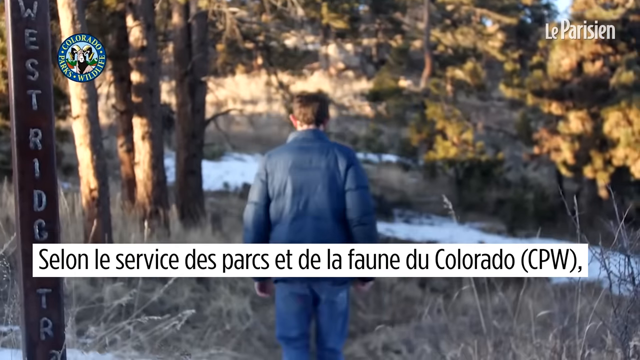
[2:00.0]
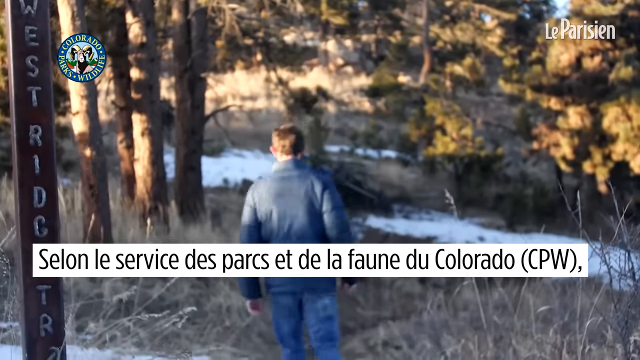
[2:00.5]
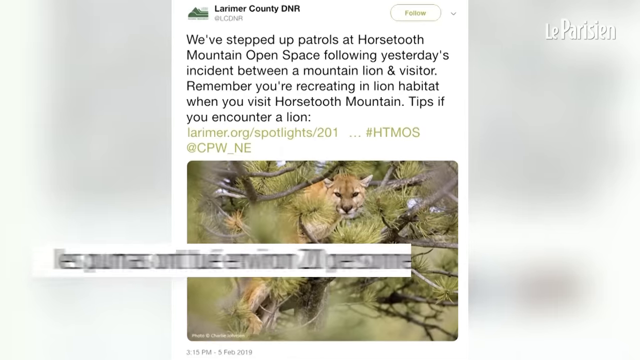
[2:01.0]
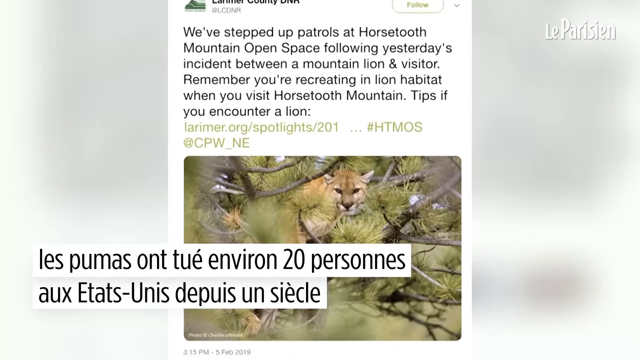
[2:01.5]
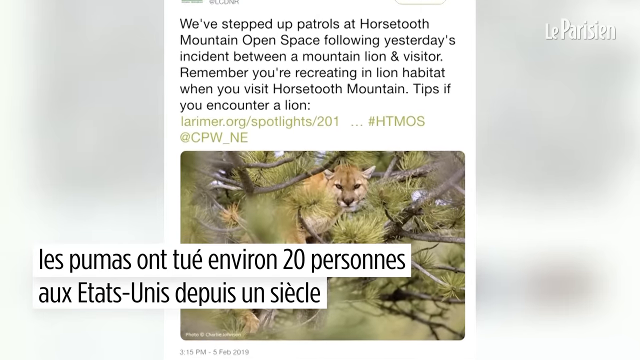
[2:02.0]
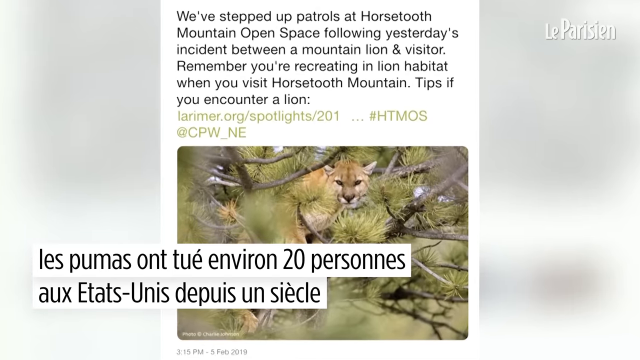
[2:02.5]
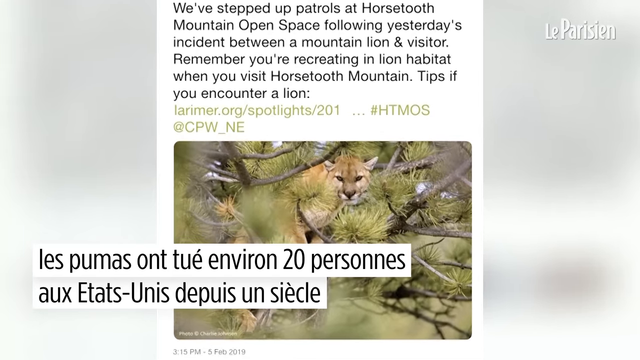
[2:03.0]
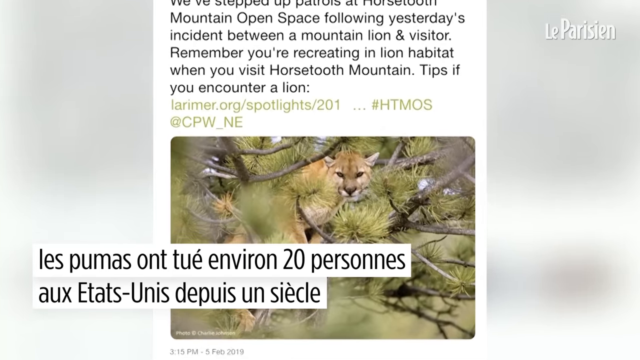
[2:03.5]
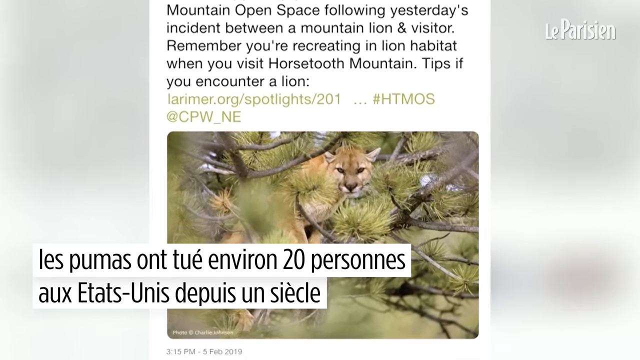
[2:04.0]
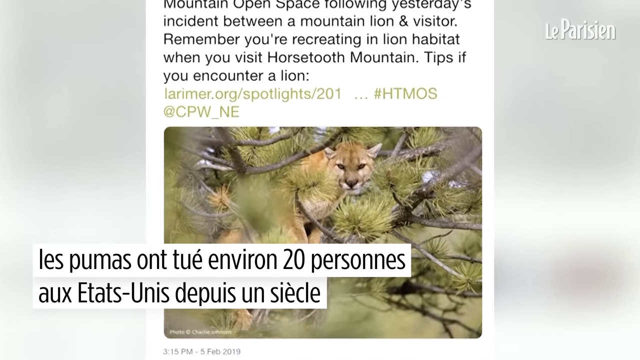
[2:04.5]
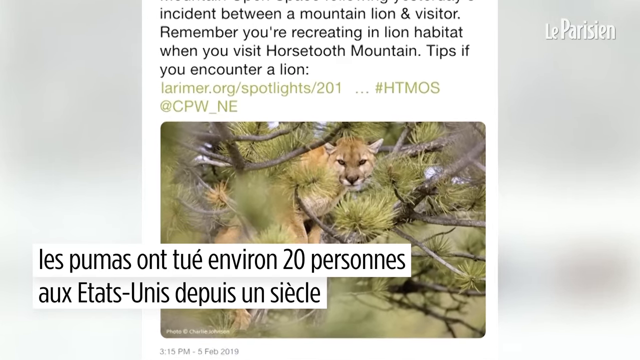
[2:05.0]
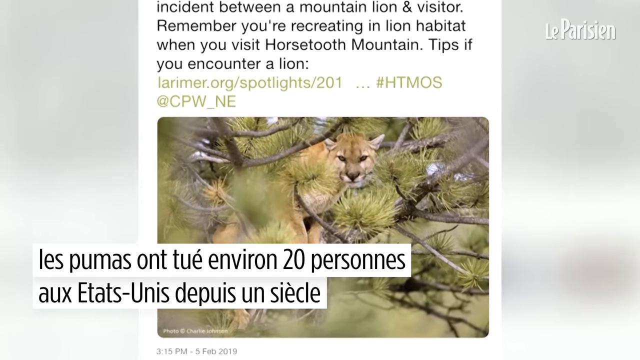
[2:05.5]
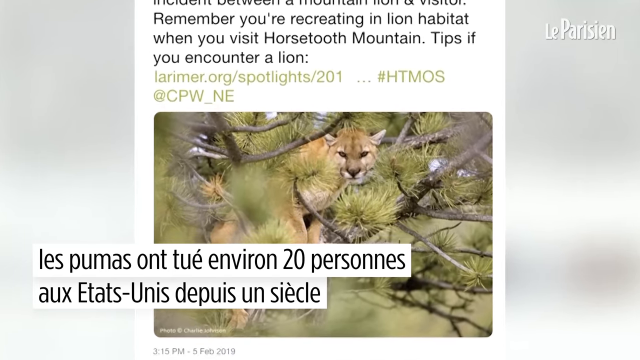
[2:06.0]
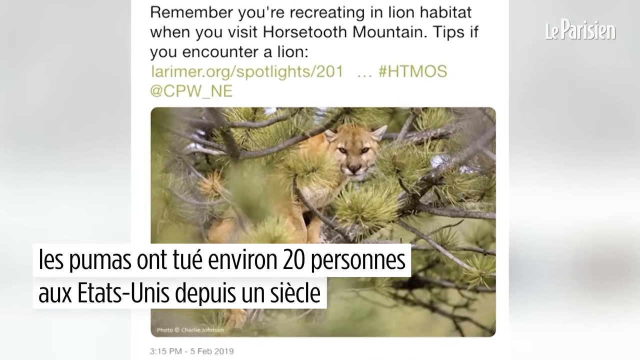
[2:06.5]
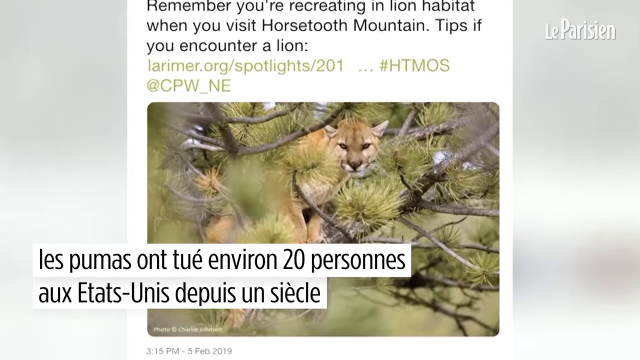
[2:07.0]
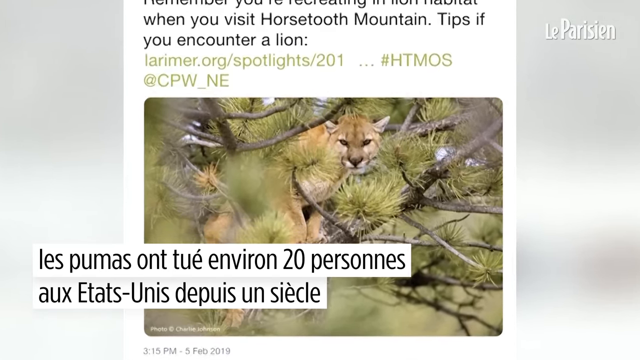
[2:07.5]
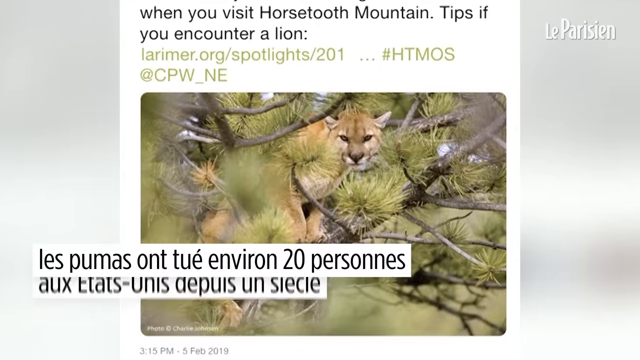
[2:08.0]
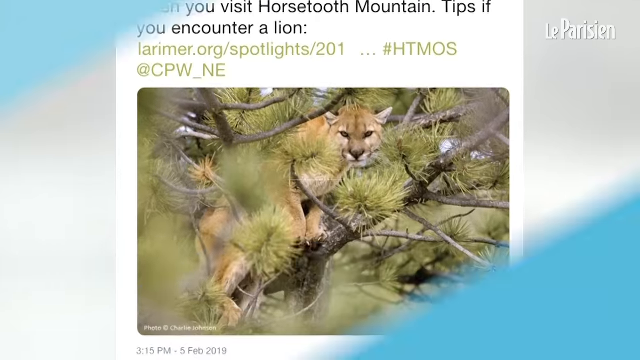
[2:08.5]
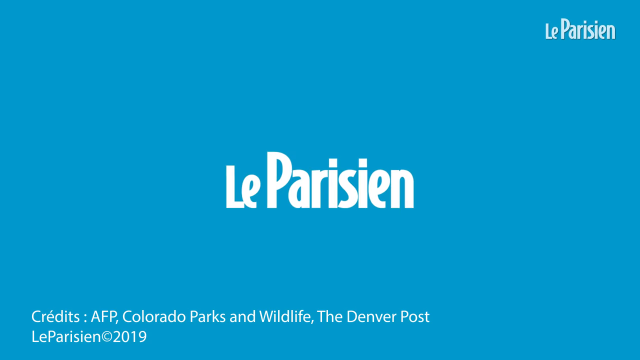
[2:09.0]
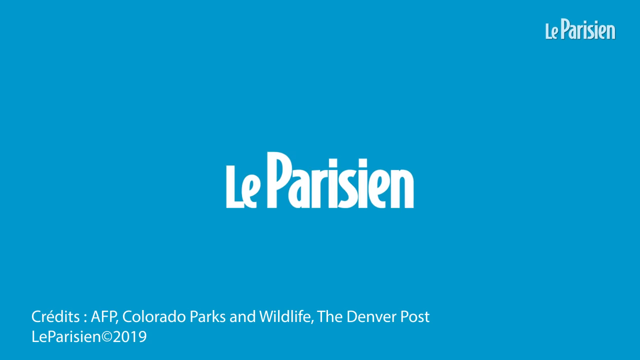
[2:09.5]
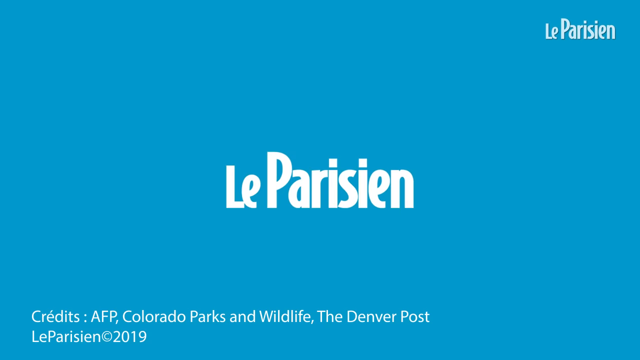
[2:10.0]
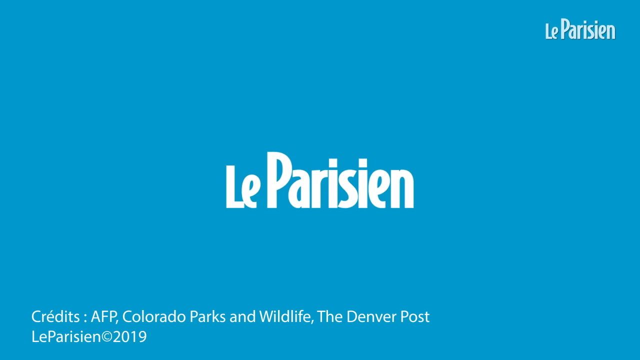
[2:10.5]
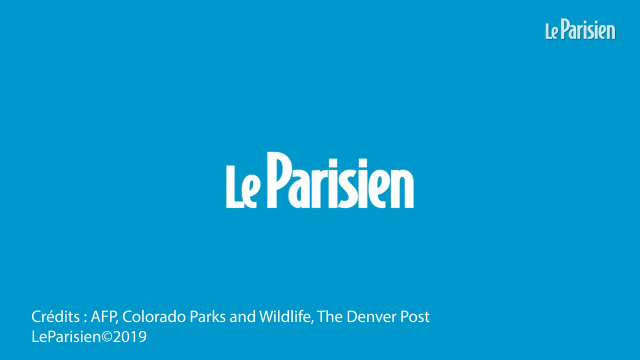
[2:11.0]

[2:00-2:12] A picture shows a man in a blue puff jacket standing in the wilderness, with many trees in the background. A sign on the left says "west RIDC," with the rest of the text cut off. There seems to be snow in the distance, with white patches on the ground. Black text on a white background is at the bottom middle of the screen, and a small gray logo is at the top right. The man walks forward. The scene changes to a picture of a paragraph with a picture of the mountain lion underneath; the background is blurred and the picture pans in to the mountain lion. A closing scene closes in blue and displays "La Prussiane" in the center.